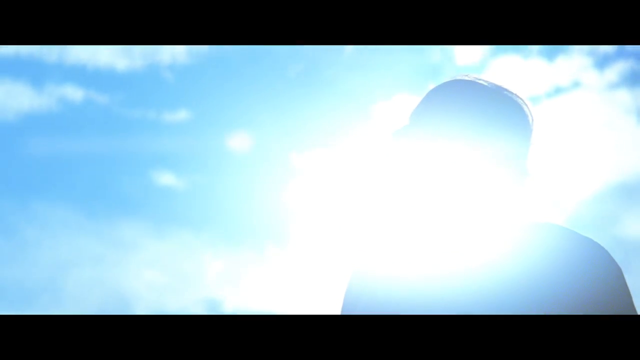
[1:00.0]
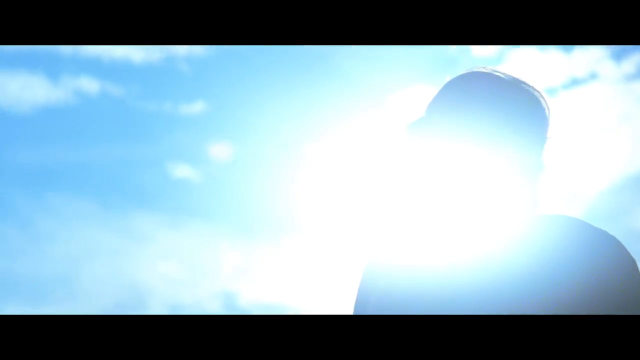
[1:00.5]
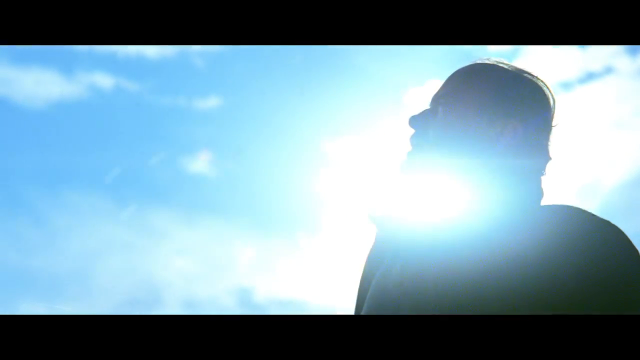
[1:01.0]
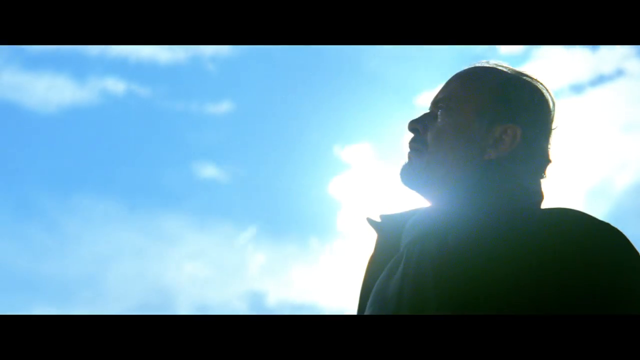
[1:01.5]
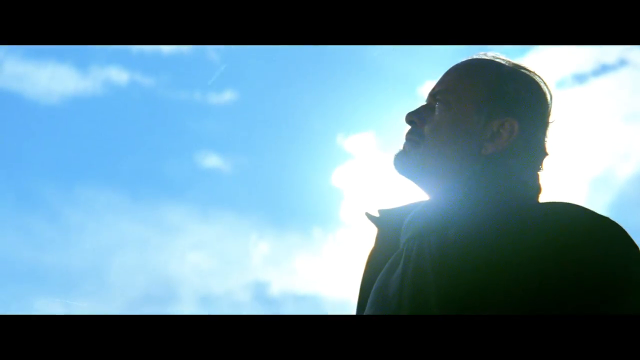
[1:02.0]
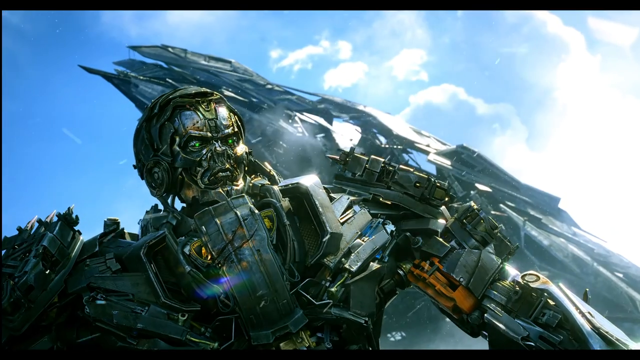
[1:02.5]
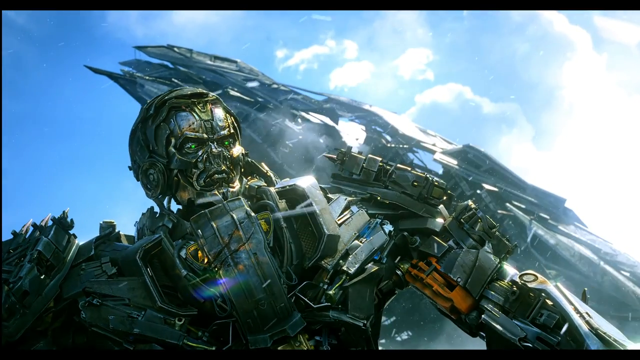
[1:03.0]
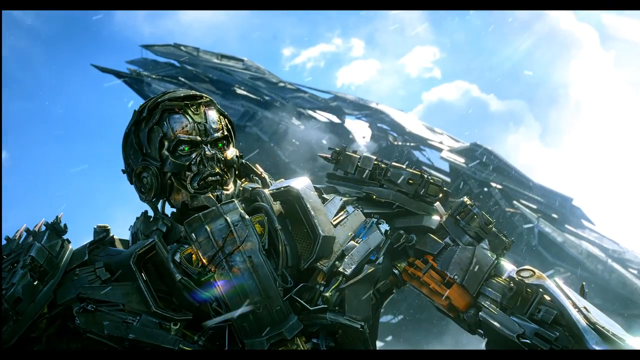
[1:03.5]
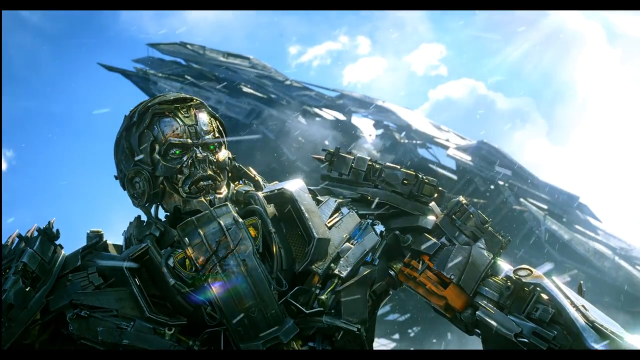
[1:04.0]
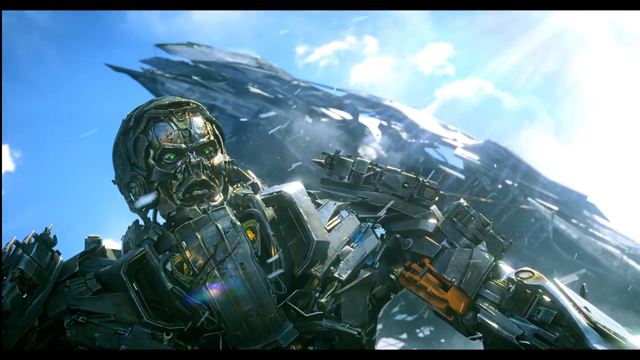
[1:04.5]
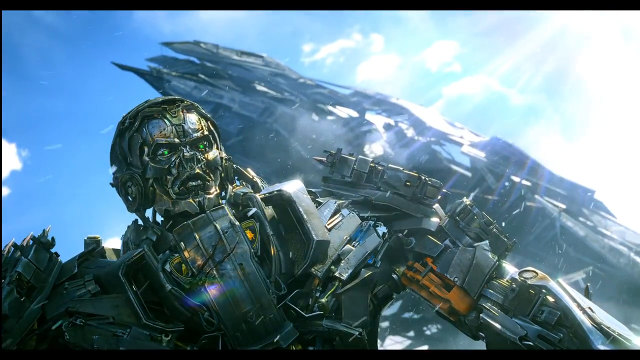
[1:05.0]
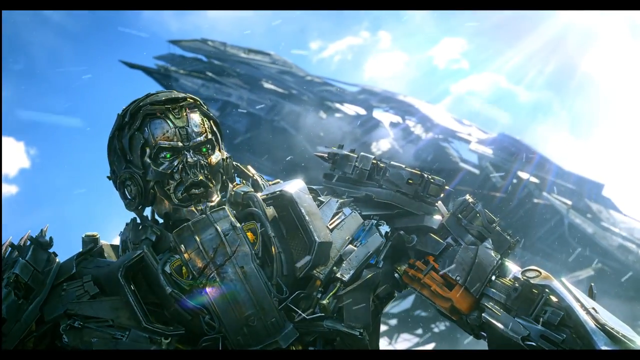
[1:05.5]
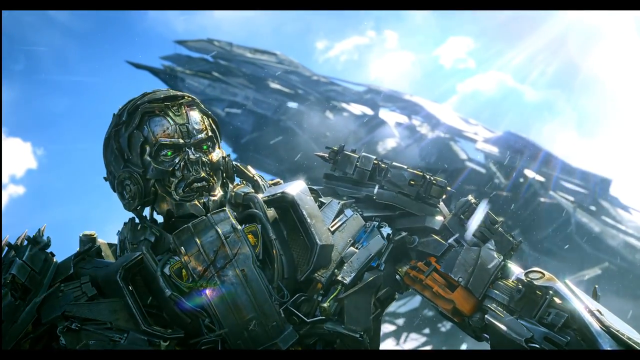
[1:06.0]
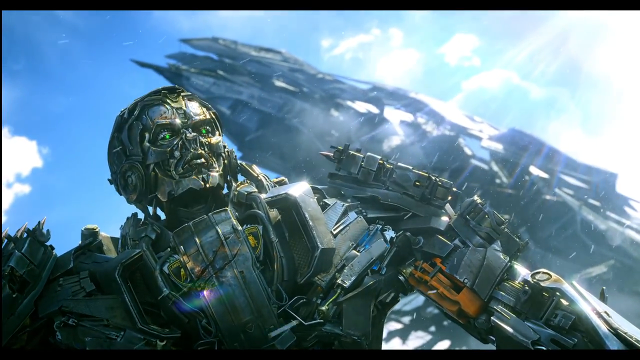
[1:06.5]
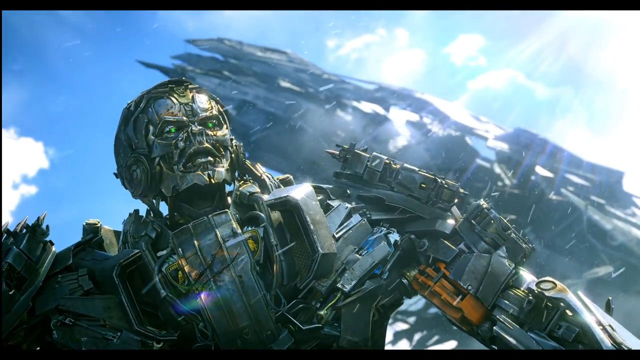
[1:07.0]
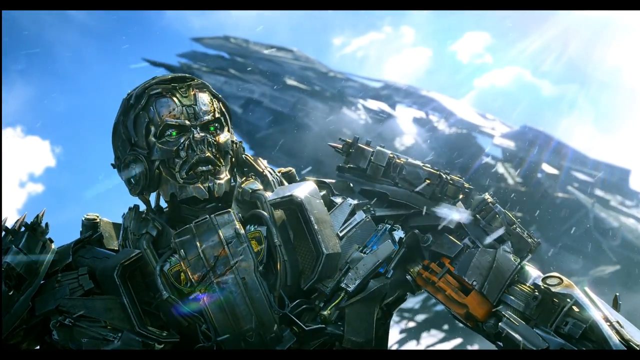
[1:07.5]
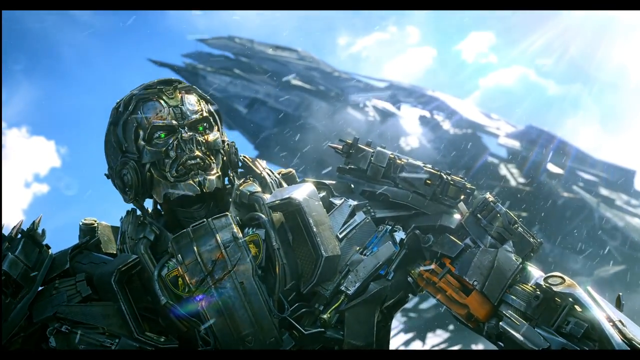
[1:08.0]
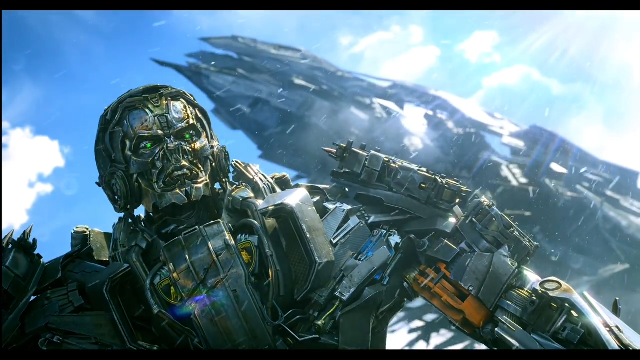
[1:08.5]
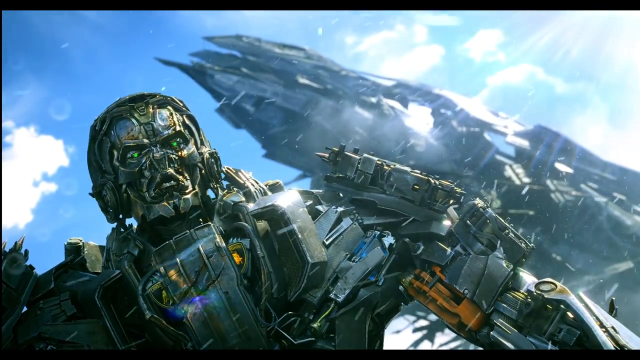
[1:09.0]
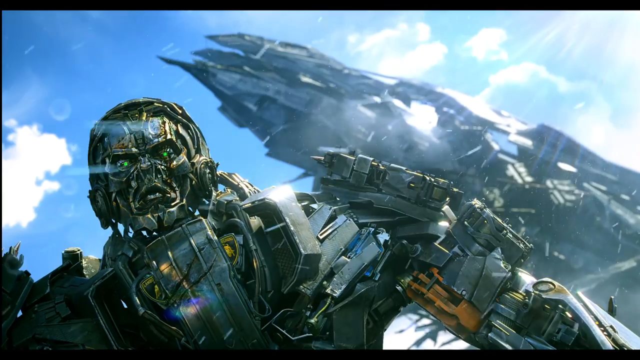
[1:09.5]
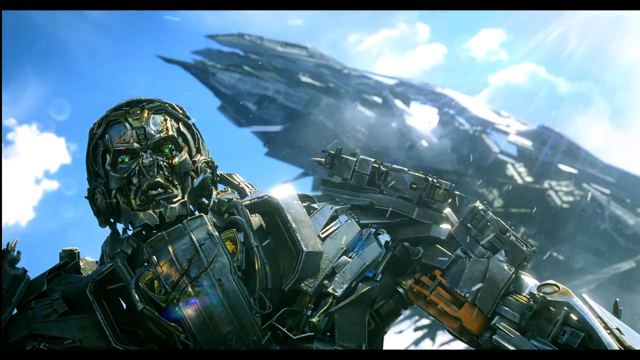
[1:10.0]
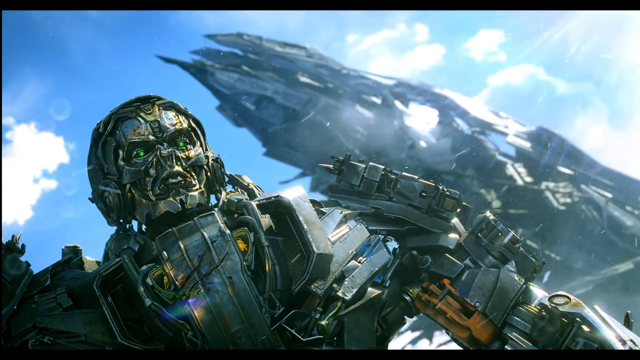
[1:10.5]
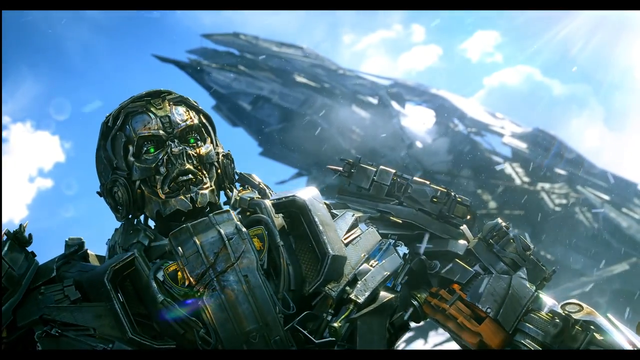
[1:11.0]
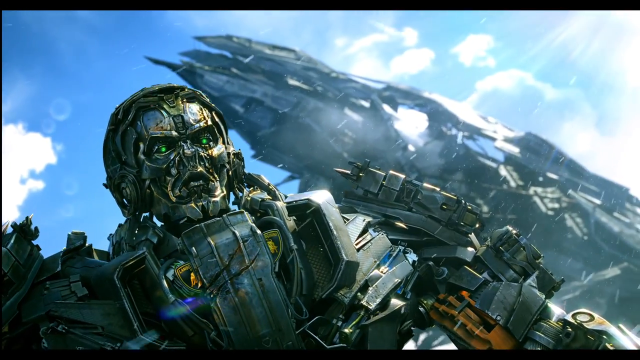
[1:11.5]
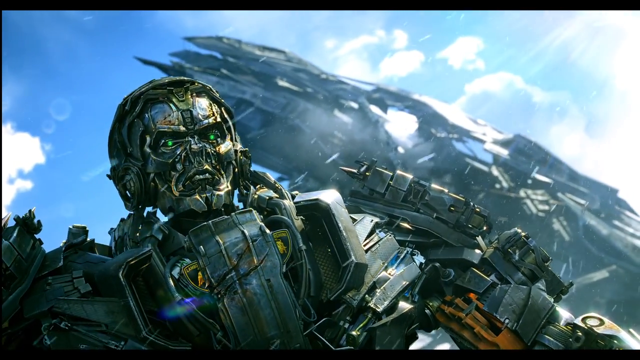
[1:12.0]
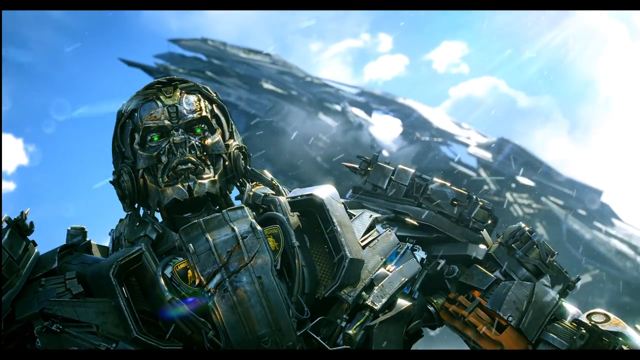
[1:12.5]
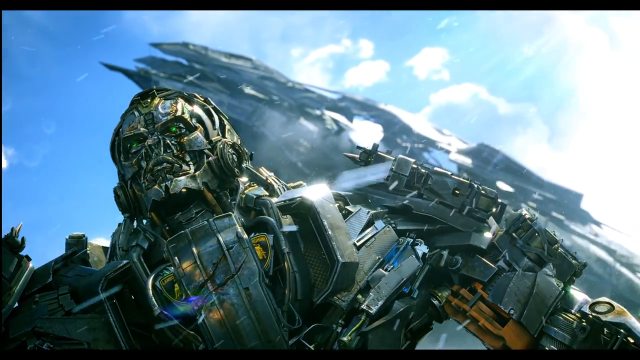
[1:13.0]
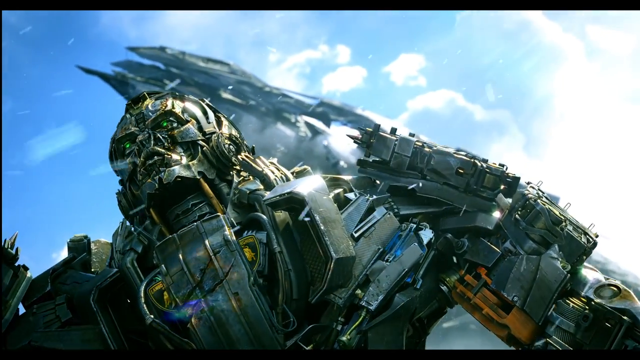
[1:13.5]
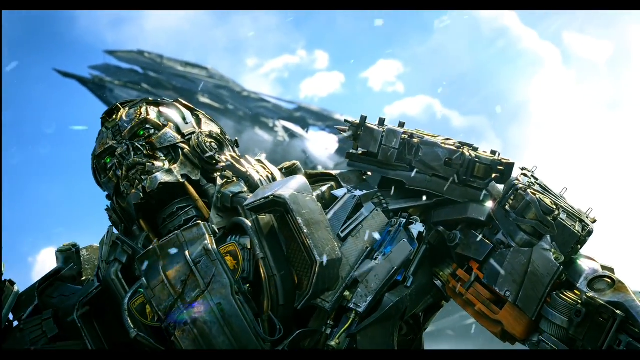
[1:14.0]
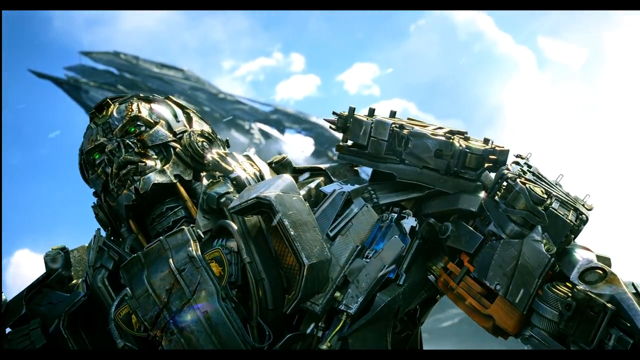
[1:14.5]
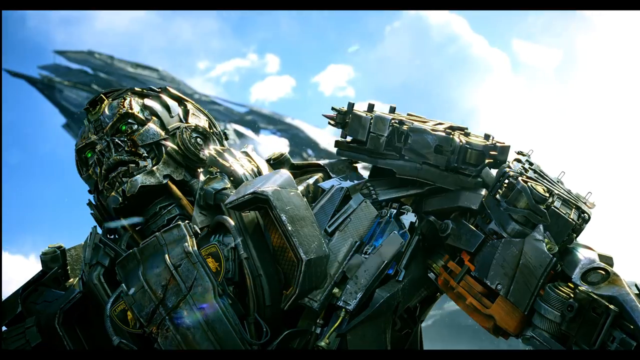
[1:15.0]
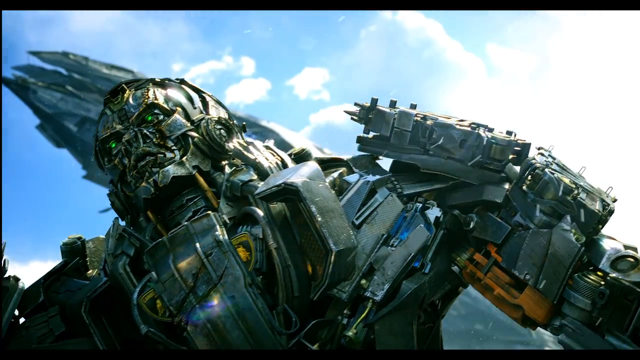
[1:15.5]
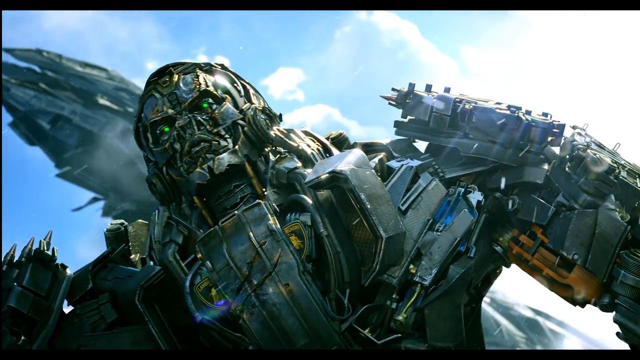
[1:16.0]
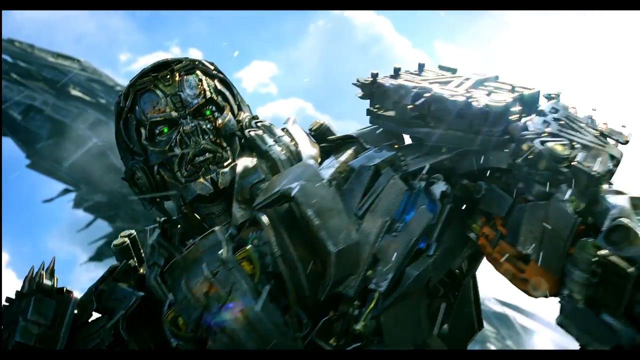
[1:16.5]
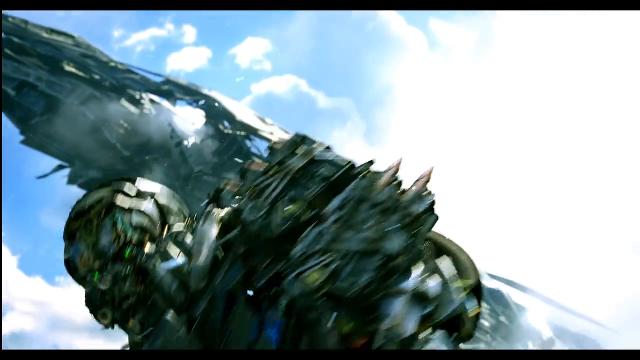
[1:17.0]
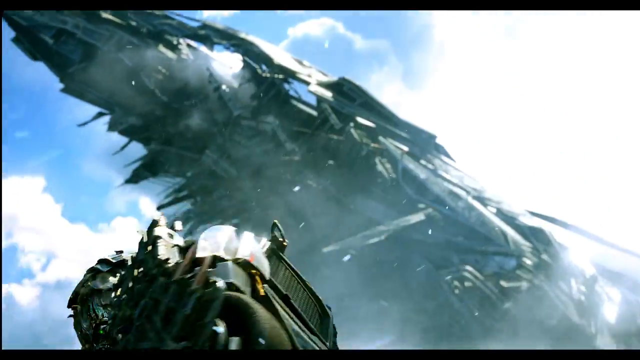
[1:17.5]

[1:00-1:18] After the glare of the sun, the man says something to the alien, and the alien seems to calm down. No longer angry, the alien says something to the man, possibly about the spaceship. The alien is seen more clearly, with a lot of different machine parts on his body, and his shoulders seem to carry some sort of weapon storage. He seems to talk in a calm but firm manner, possibly warning the man about a threat or danger. The alien looks around his environment at his broken, damaged spaceship and is possibly saying something about it; the two are possibly discussing the man fixing the spaceship. At the end of the video, the alien seems to walk away from the conversation.